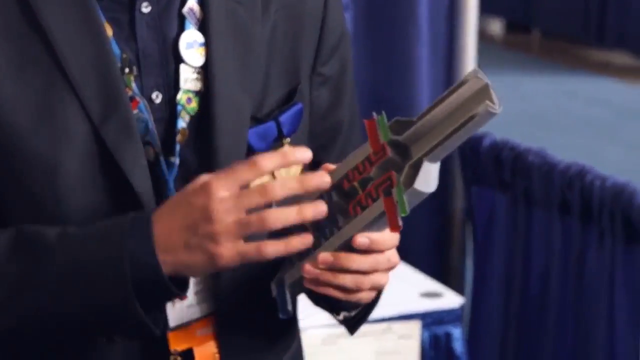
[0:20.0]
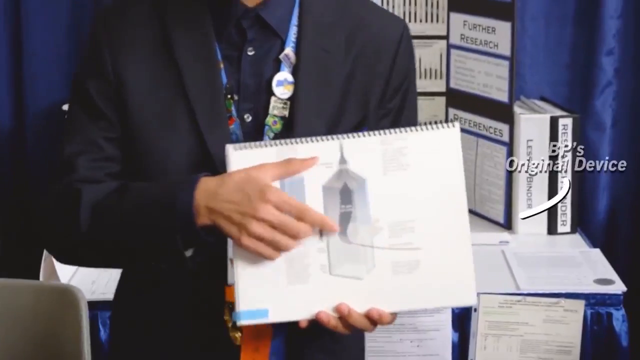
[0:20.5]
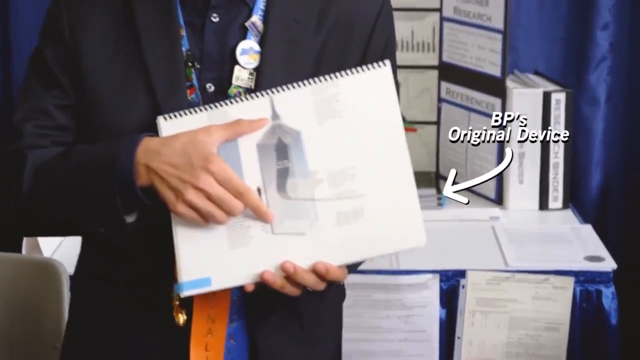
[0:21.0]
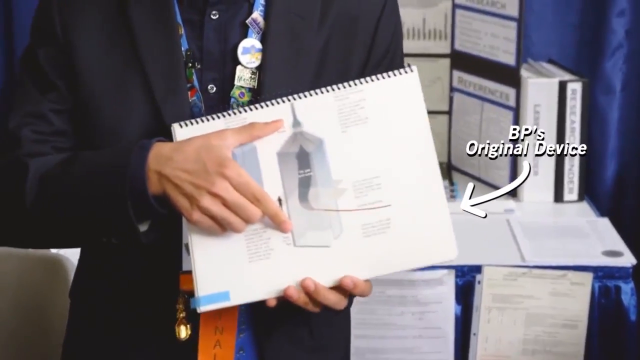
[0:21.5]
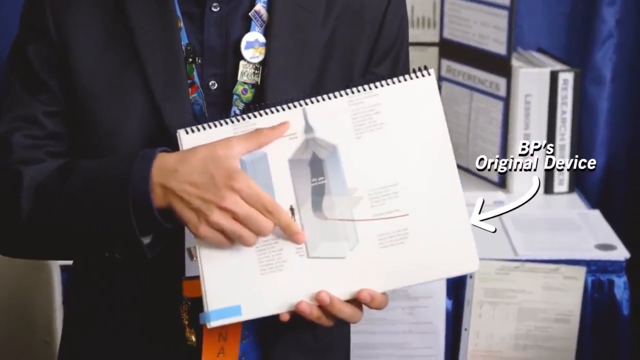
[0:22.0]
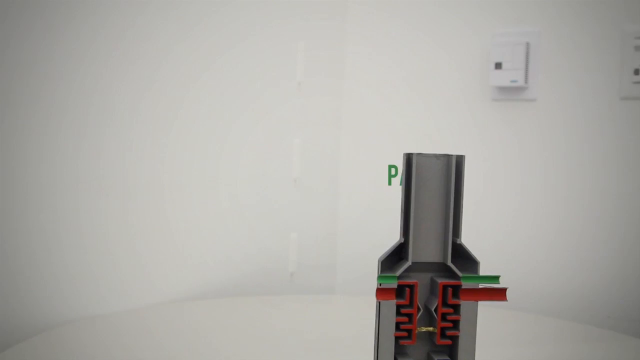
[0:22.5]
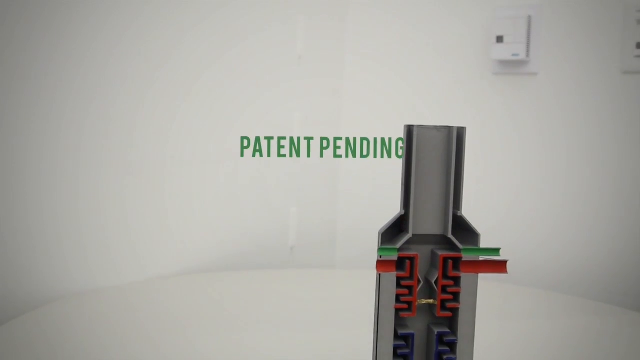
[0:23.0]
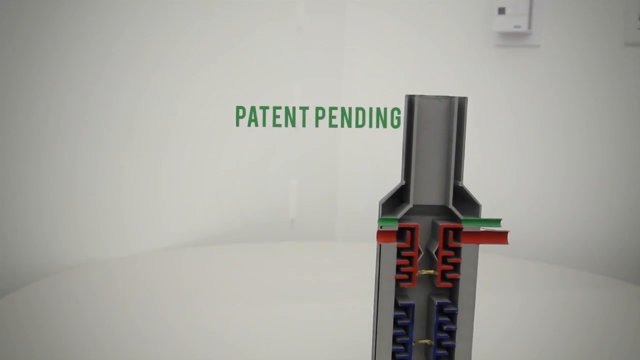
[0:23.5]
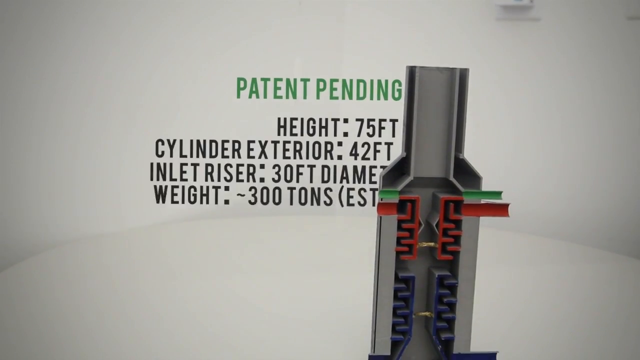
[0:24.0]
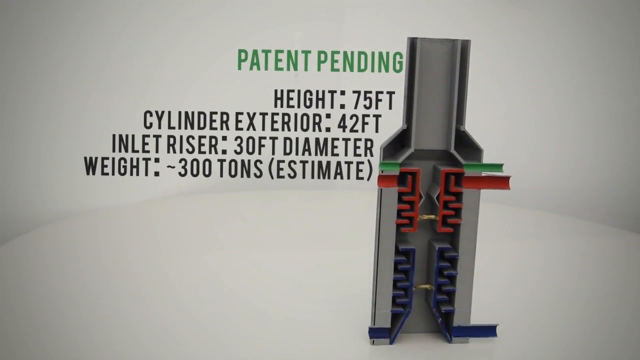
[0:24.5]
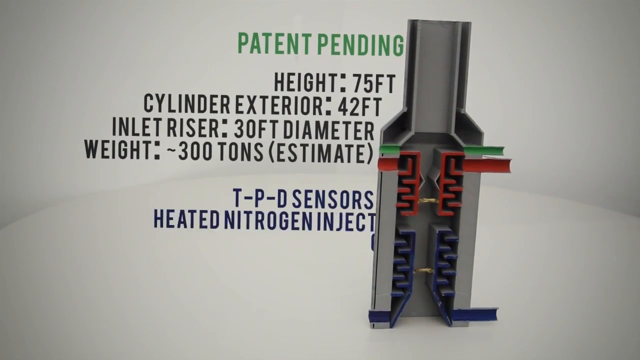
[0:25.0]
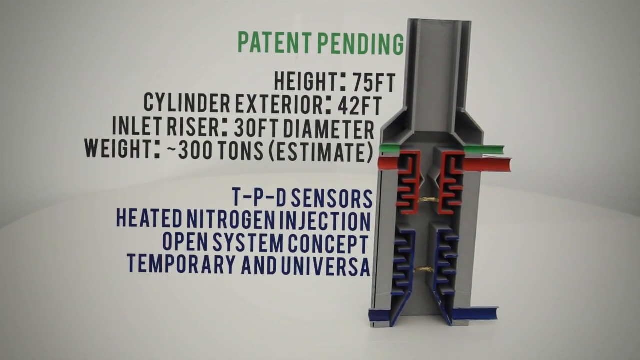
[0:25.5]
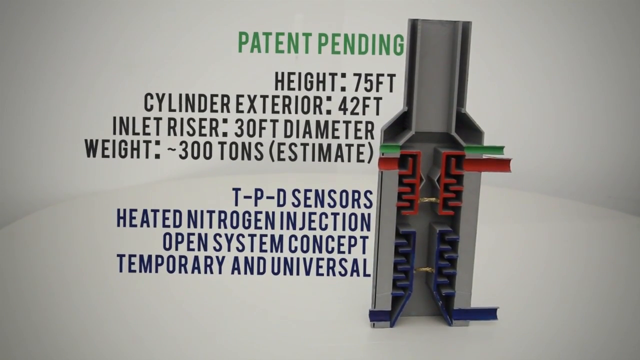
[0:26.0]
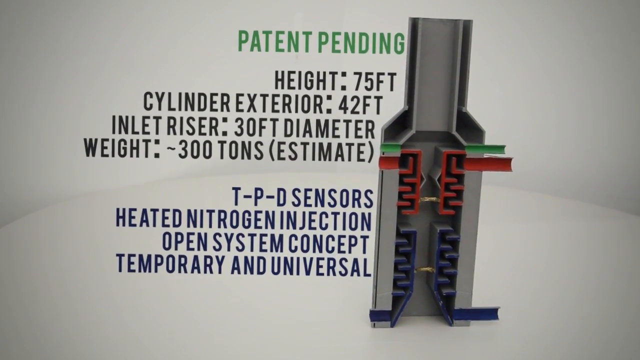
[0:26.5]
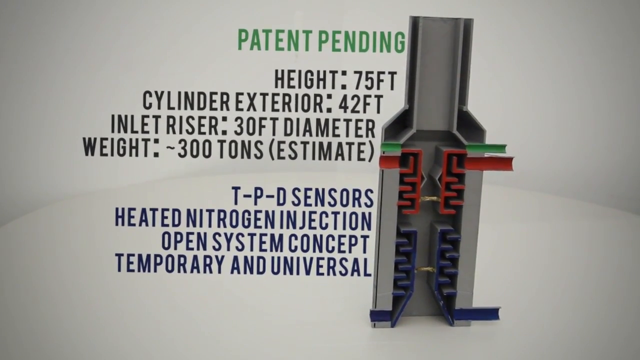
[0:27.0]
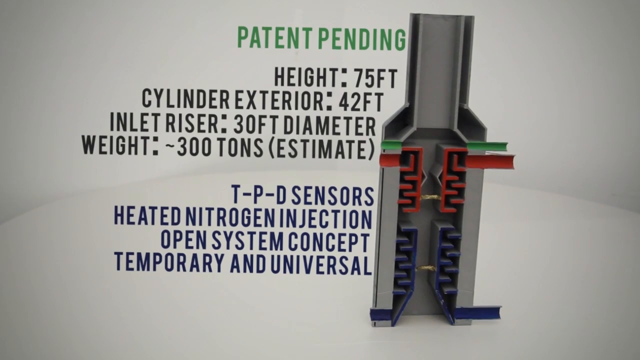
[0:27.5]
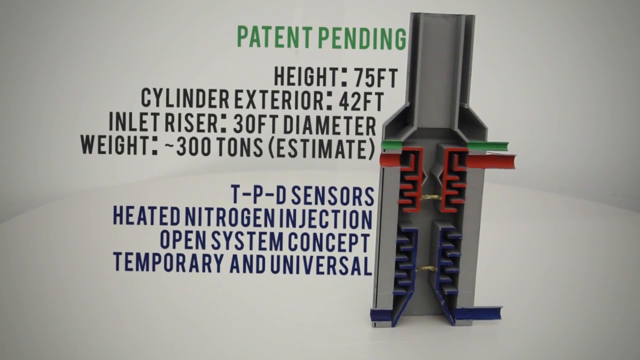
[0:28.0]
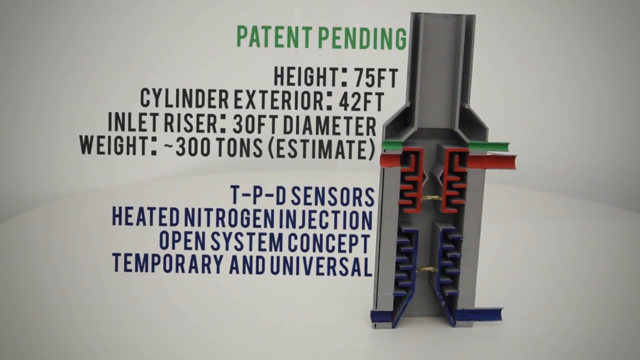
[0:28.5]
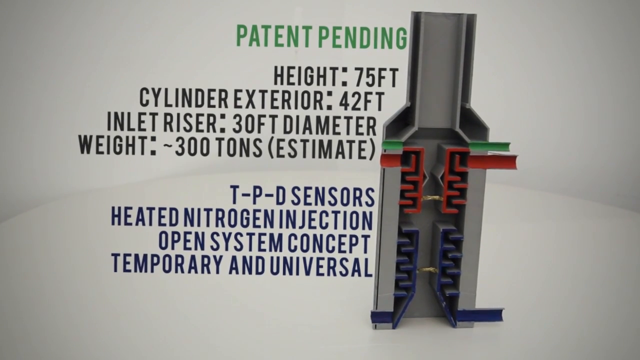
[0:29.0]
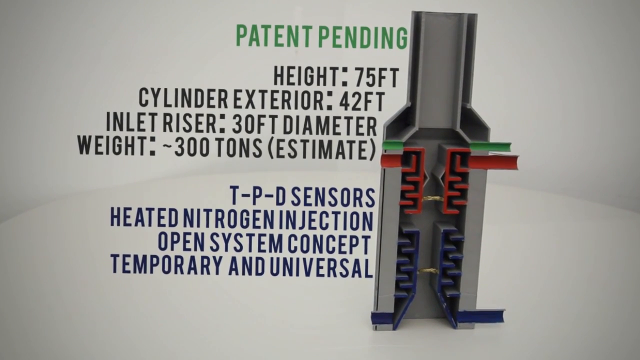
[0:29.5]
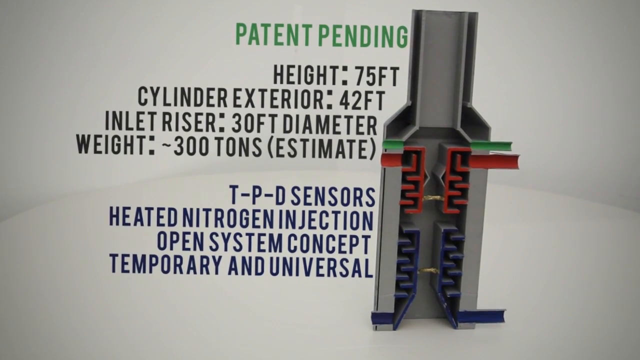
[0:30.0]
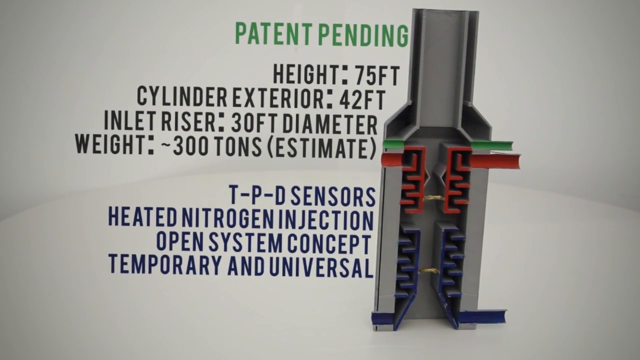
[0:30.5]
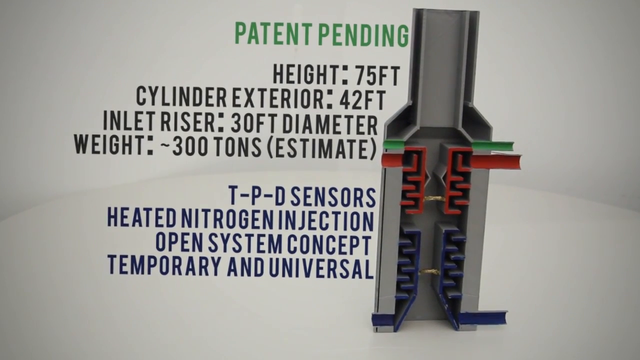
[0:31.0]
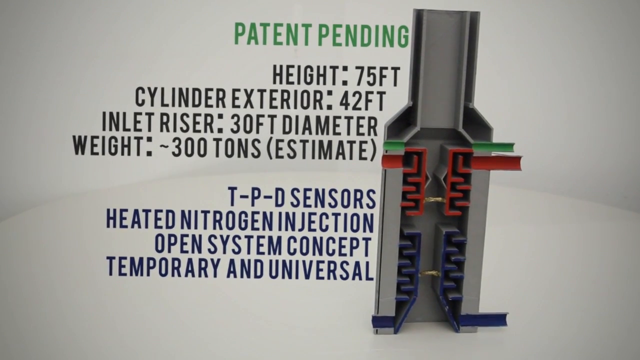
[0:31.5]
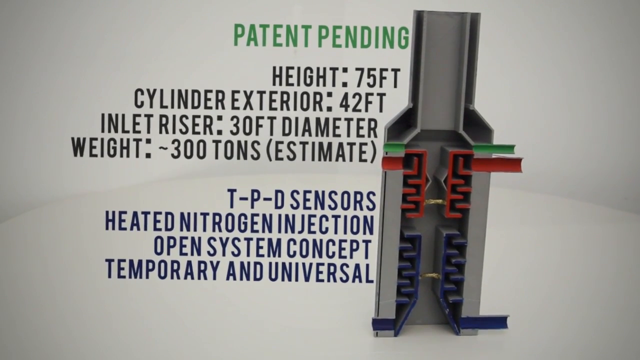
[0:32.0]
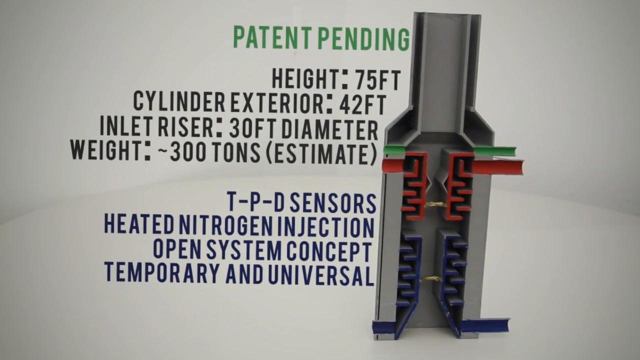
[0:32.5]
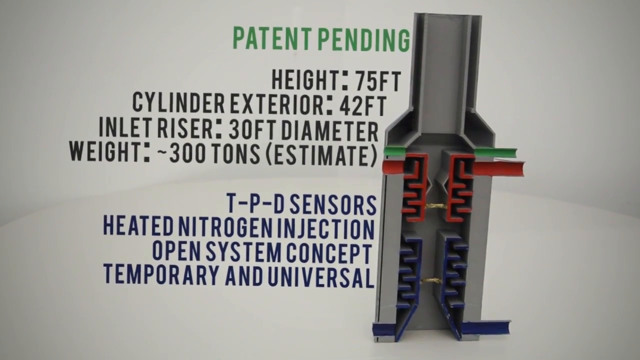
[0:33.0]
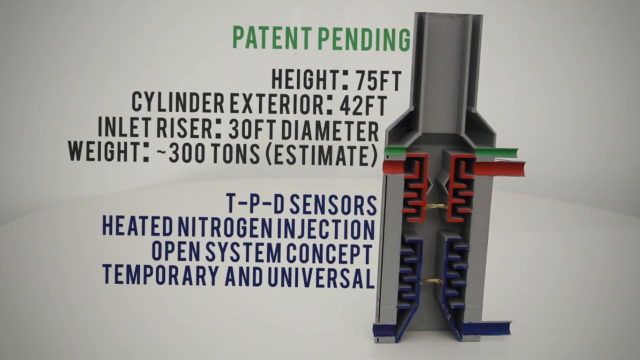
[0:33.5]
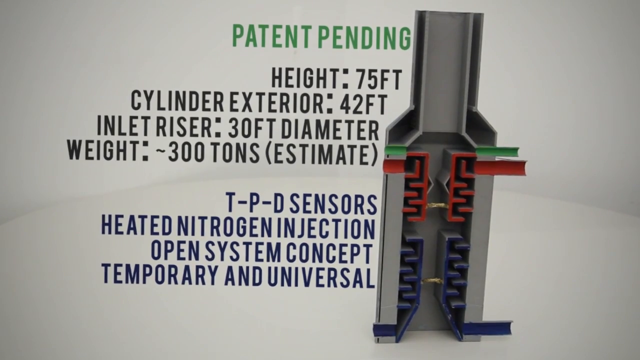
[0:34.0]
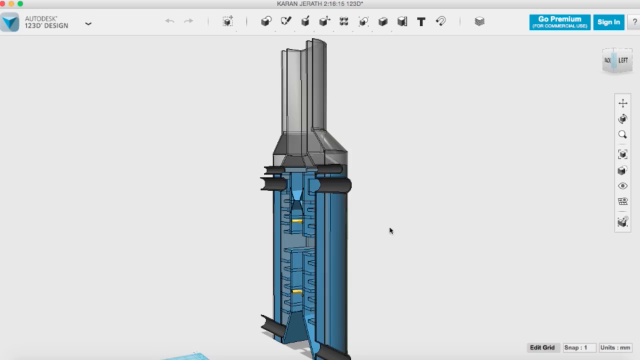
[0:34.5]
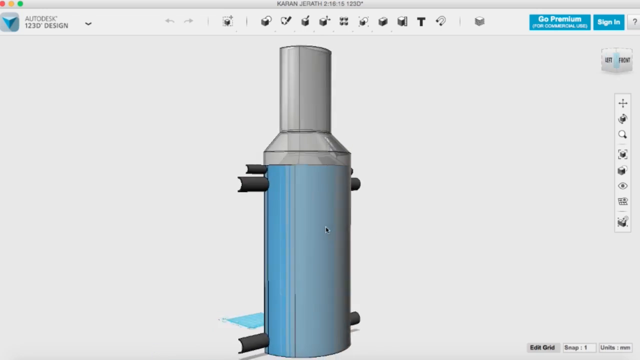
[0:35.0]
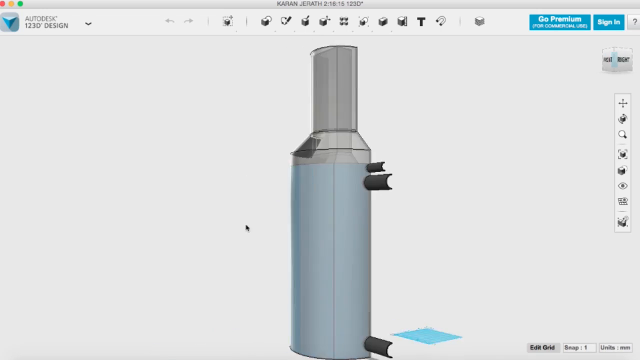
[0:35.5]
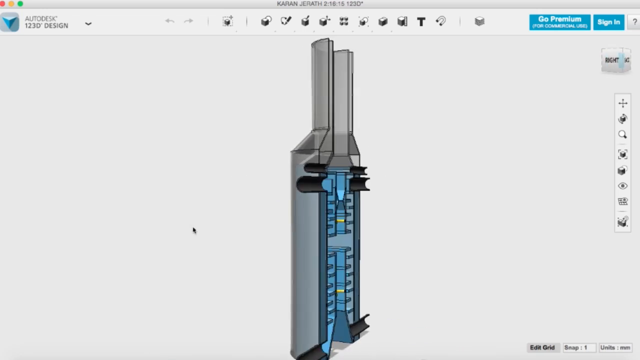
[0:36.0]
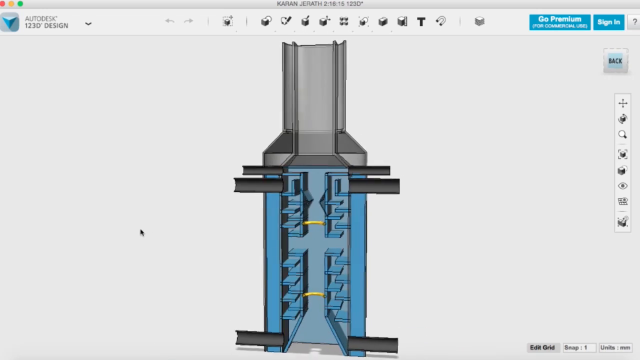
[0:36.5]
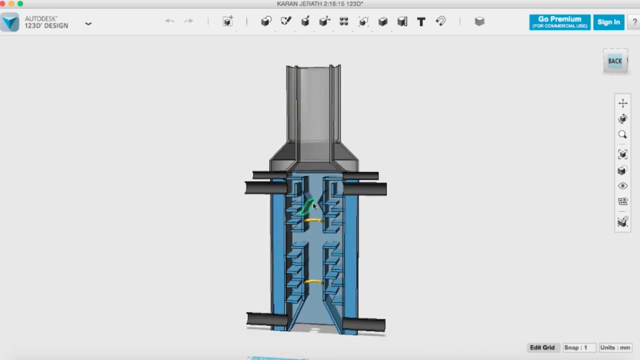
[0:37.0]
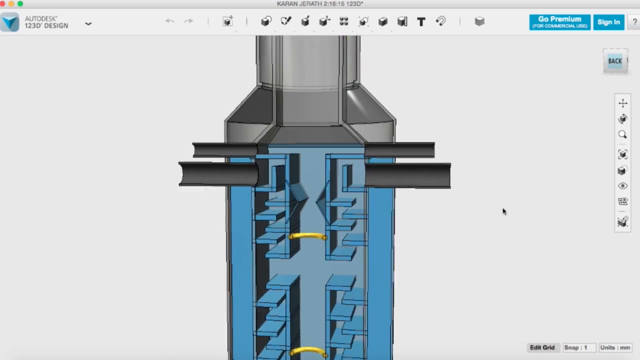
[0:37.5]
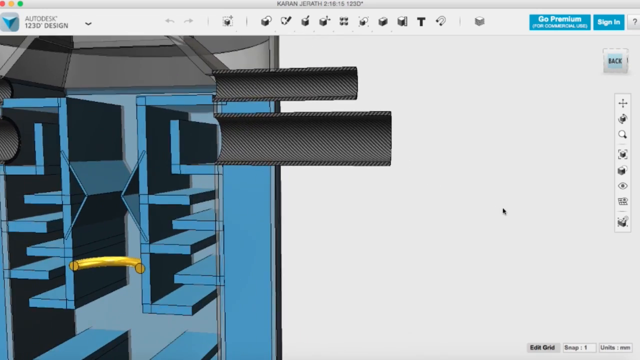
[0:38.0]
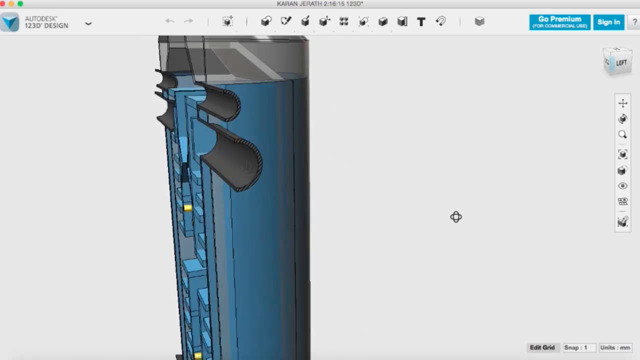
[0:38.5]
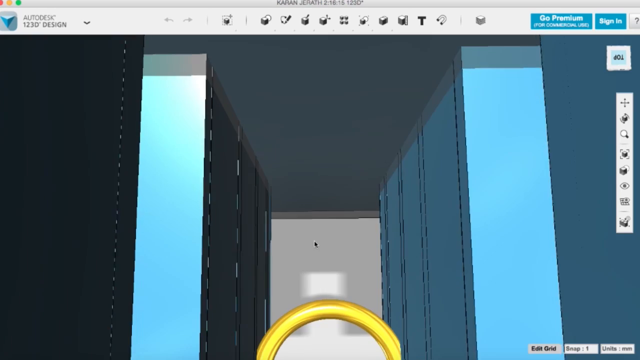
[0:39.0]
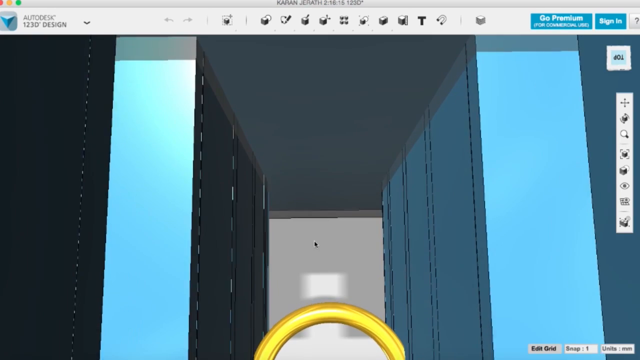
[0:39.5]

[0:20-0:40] A BP device is shown, with the original devices presented along with their height, diameter and a weight estimate. Terms such as "temporary and universal", "nitrogen injection" and "open system concept" appear. The inside of the device is shown, illustrating how it operates. The inventor, a man in his 20s or 30s, looks calm and cool.